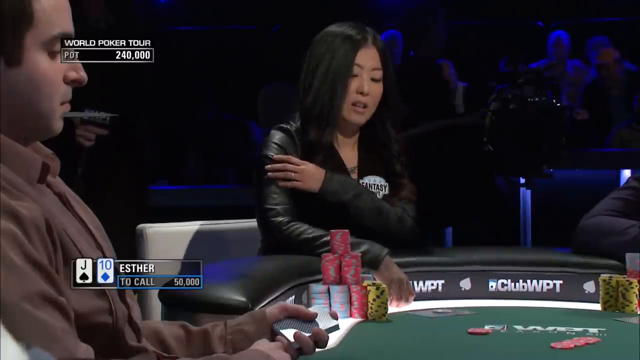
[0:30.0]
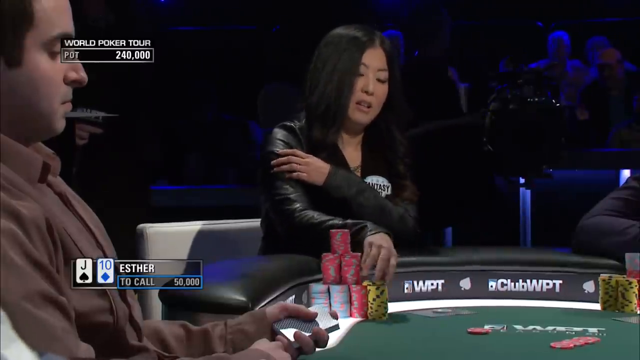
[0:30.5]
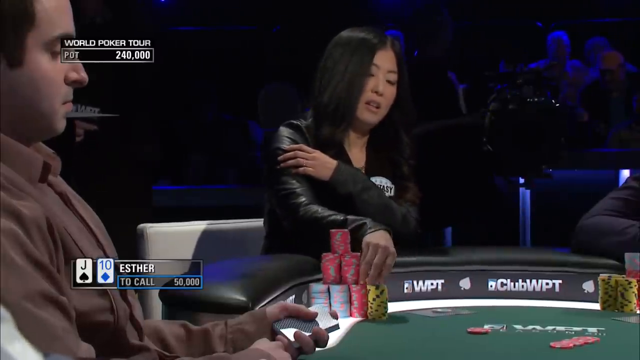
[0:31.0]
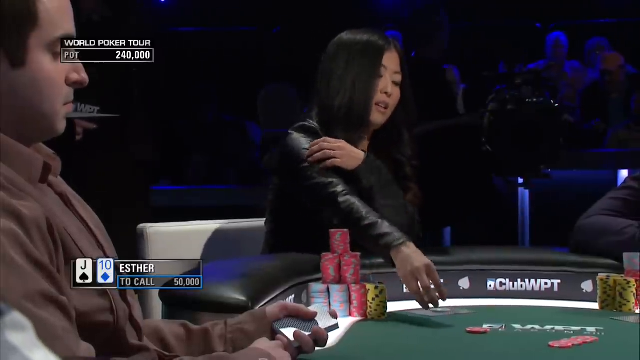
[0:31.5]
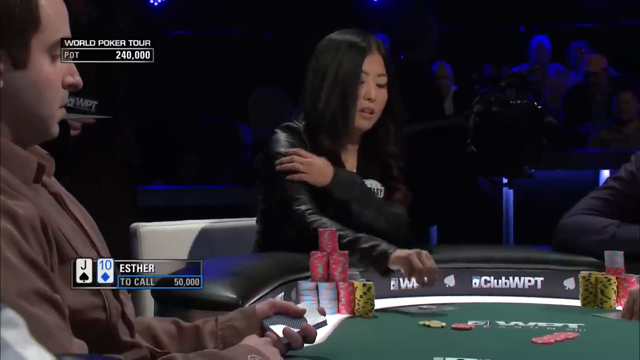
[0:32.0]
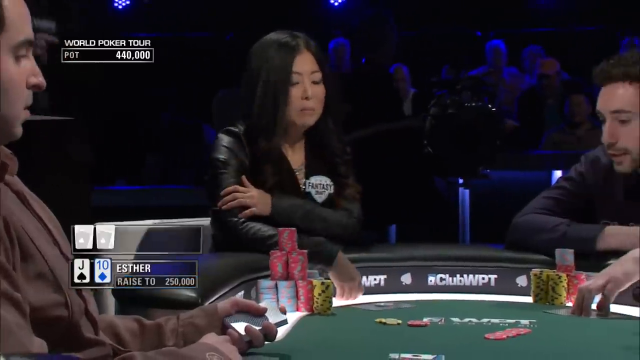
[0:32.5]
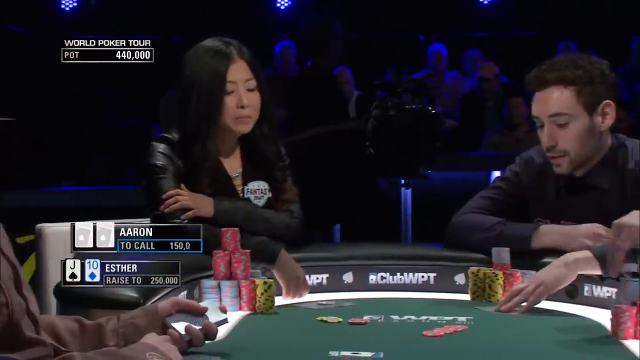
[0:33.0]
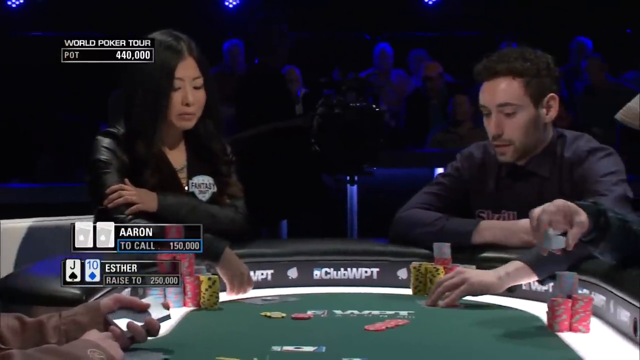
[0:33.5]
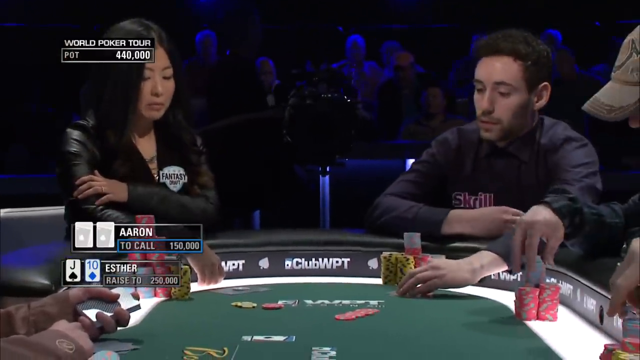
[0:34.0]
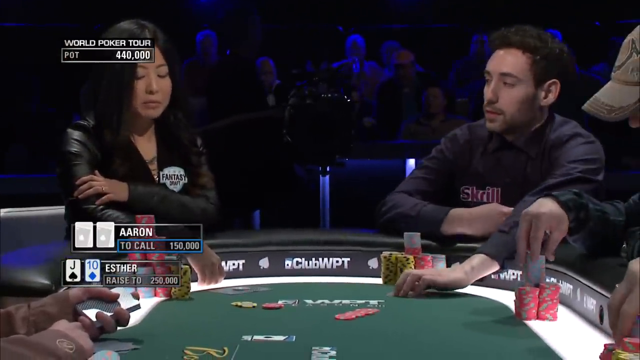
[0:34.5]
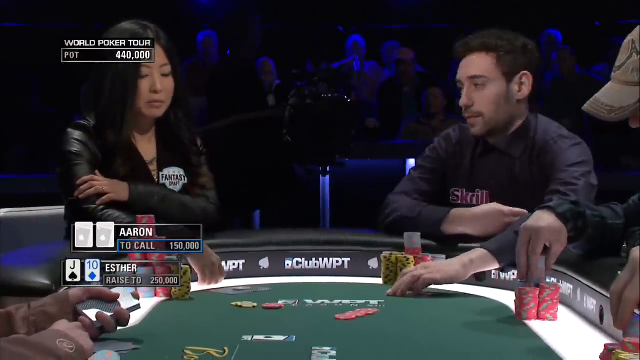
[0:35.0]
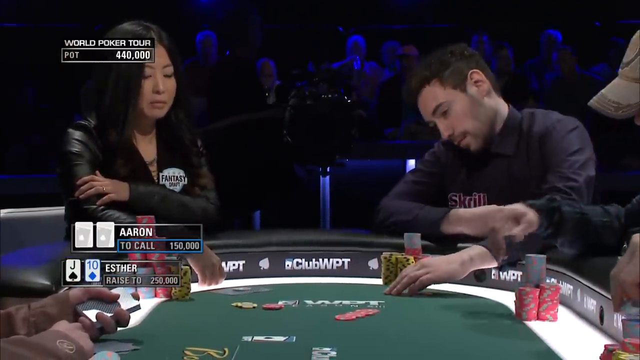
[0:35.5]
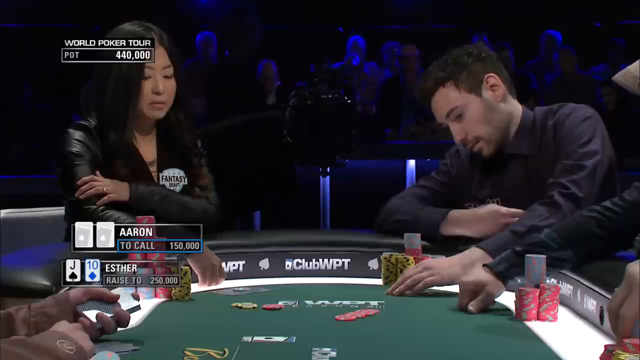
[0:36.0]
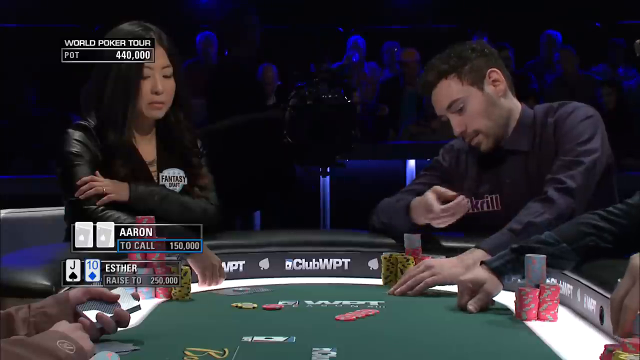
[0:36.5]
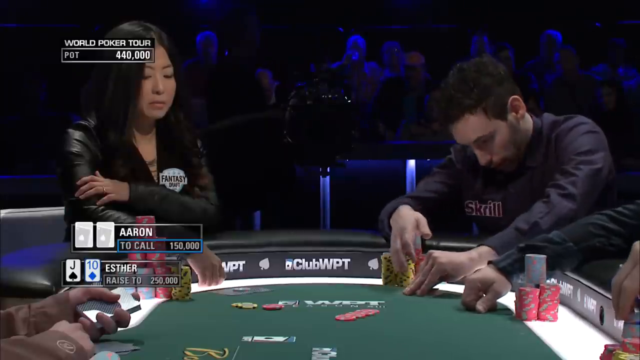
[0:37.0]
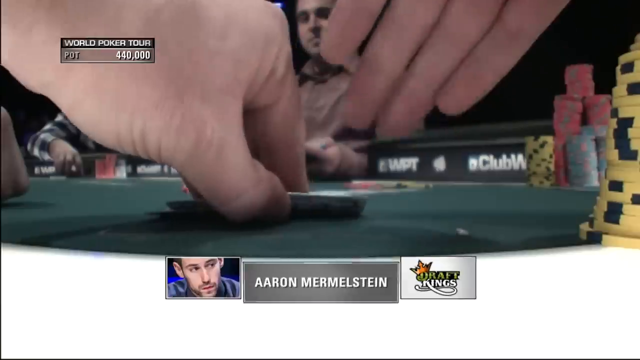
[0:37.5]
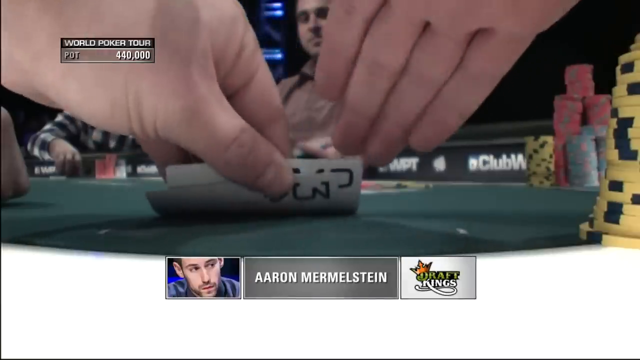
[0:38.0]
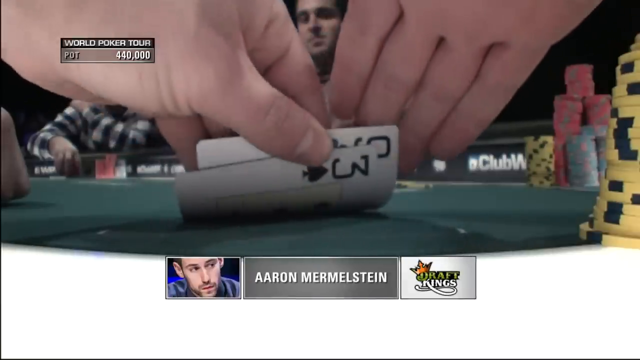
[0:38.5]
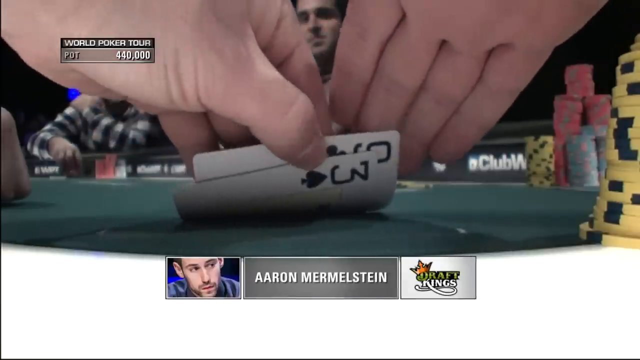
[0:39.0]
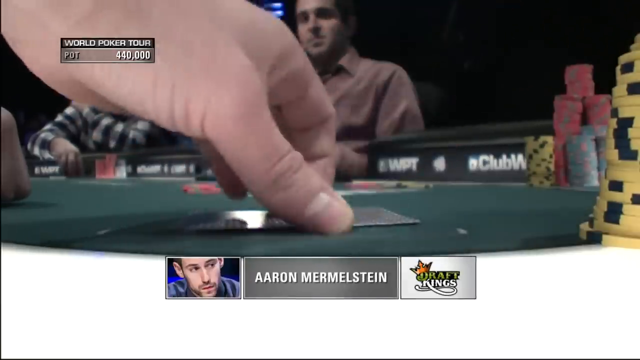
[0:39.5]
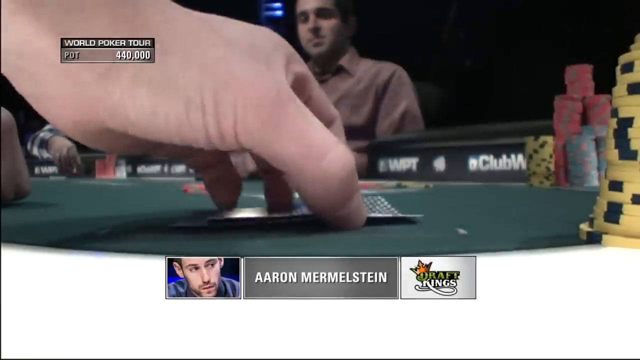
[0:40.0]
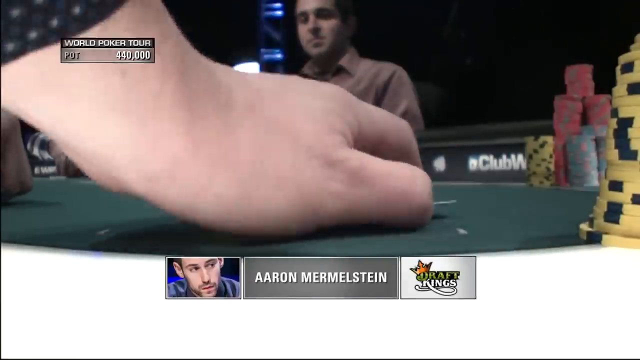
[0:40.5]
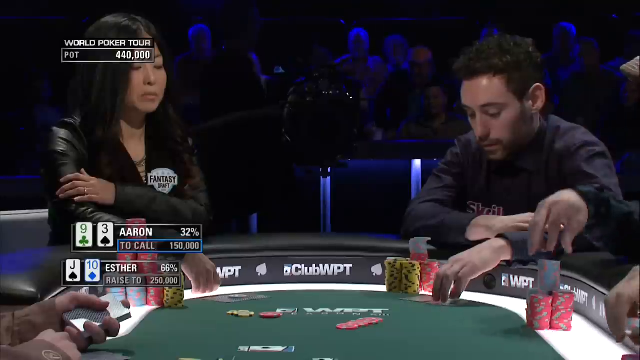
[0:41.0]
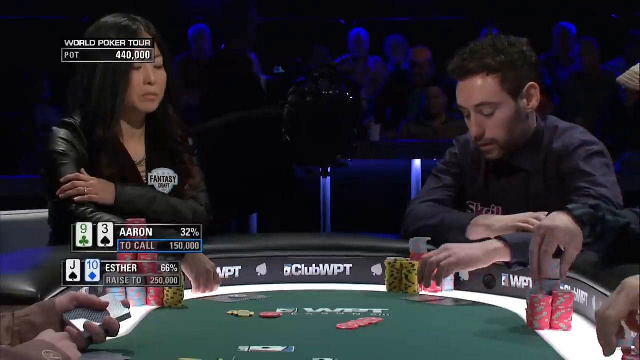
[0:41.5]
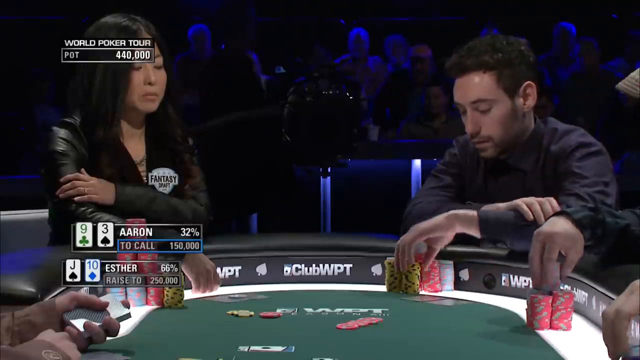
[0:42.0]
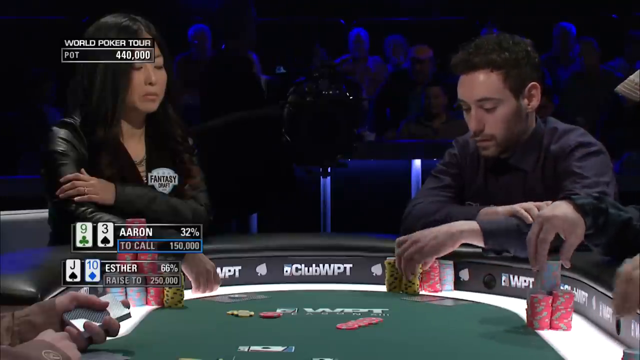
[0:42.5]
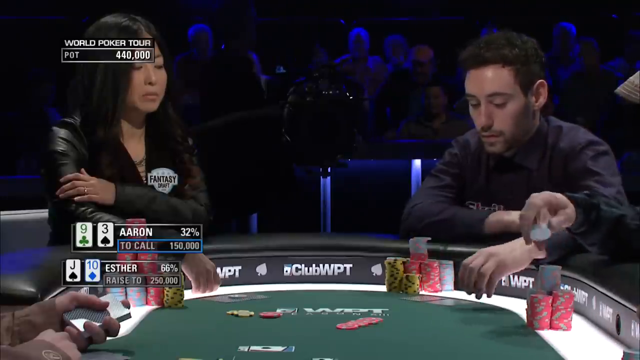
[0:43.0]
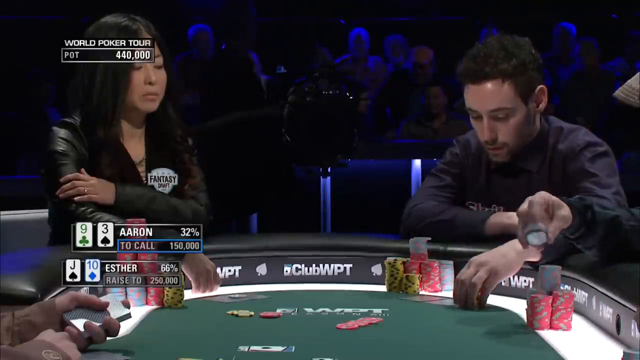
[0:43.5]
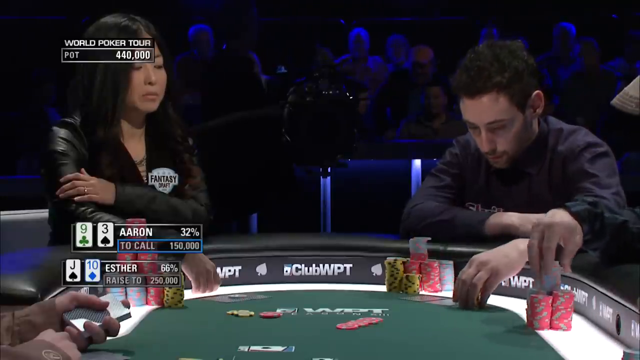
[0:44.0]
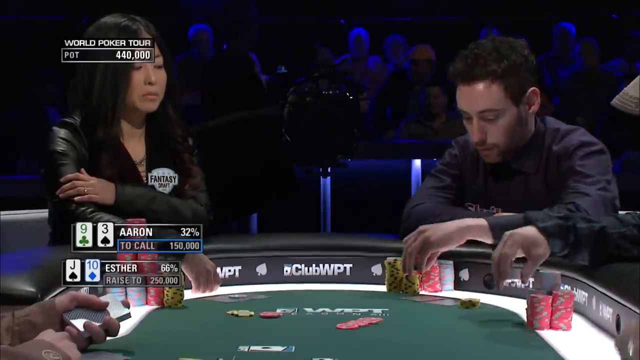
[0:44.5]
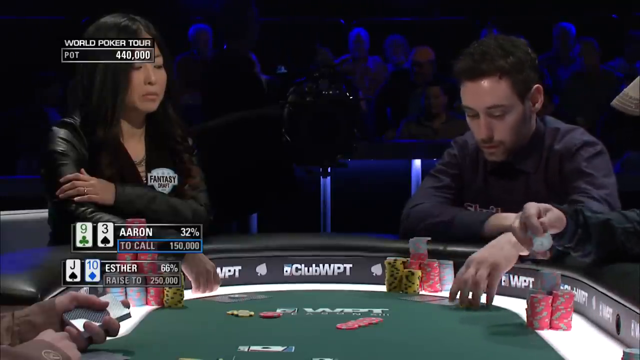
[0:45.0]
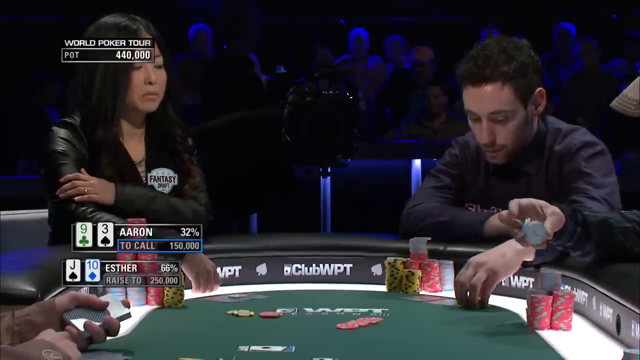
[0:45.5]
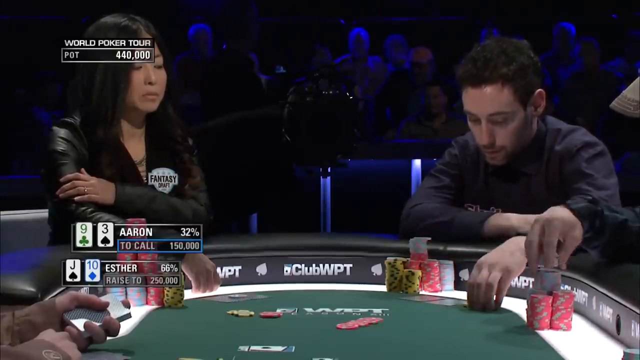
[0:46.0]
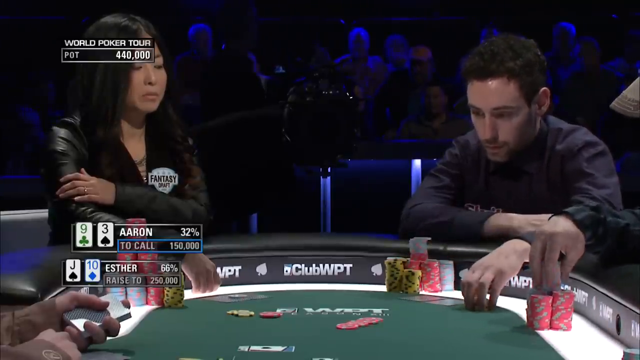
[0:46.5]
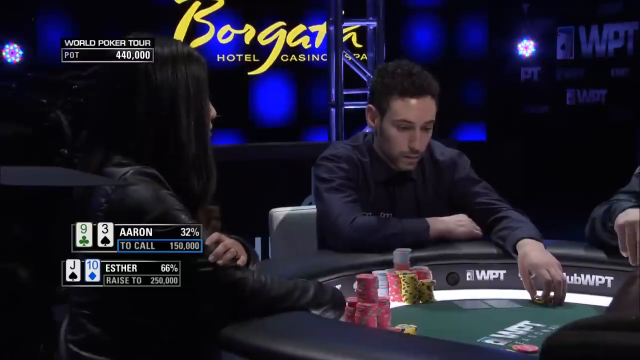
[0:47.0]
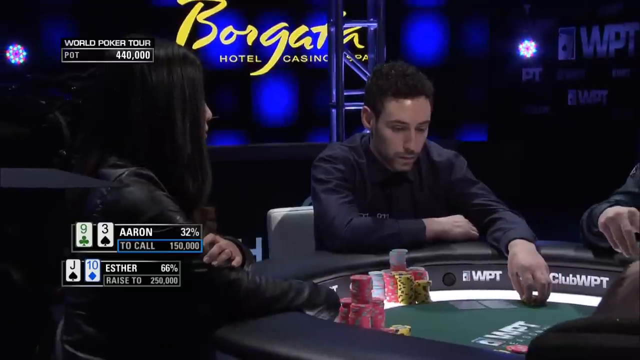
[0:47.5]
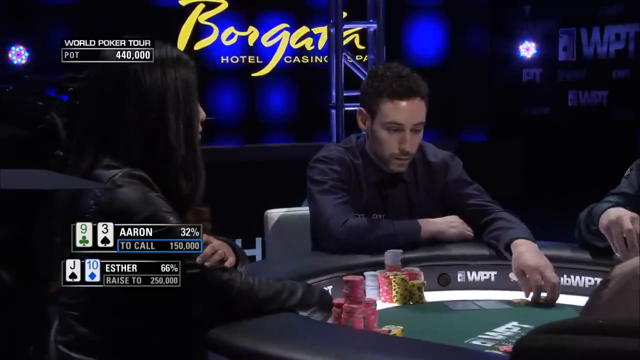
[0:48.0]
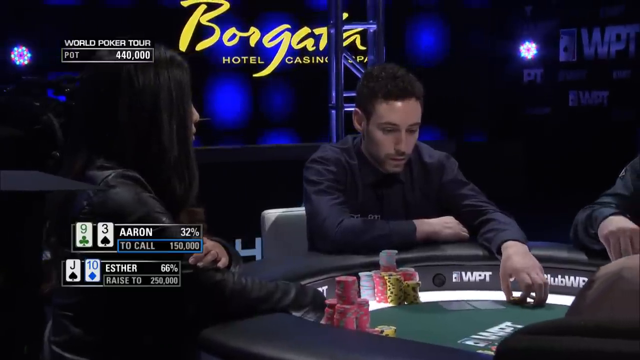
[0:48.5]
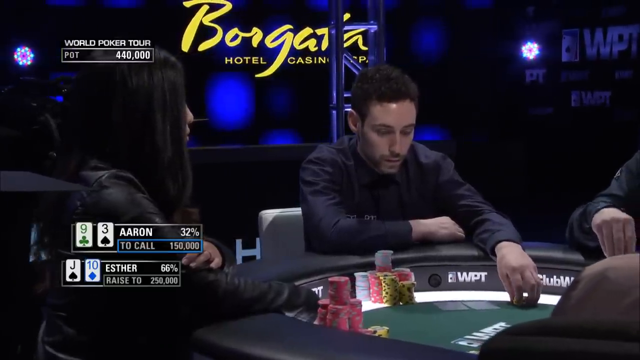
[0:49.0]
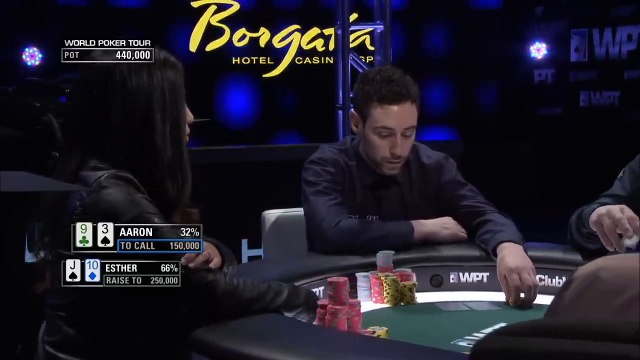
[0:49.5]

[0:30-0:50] A woman in a black leather jacket, who appears to be of Asian descent, has a logo on the left of her jacket that says "fantasy" and a ring on her finger. She grabs one yellow poker chip and throws it onto the table, appearing to look downward. Next to her, a man in a long-sleeved dark work shirt appears to look at her and tilts his head downward. The camera jumps to an undershot of the cards he has in play, showing a nine and a three. He grabs a couple of yellow poker chips, takes one and puts two back, and starts to play around with the chip. People in the background, in the crowd, look at them; the scenery and lighting there are much darker. The man is named Aaron Mermelstein, and the event is sponsored by DraftKings.